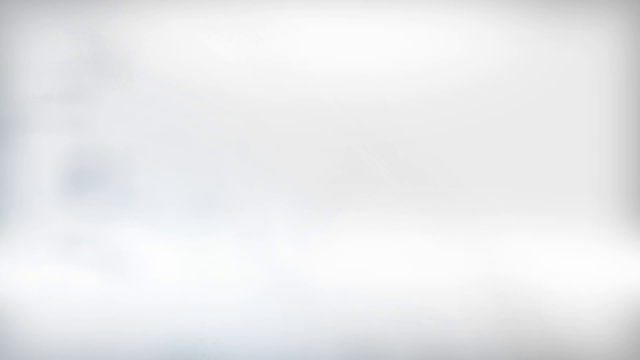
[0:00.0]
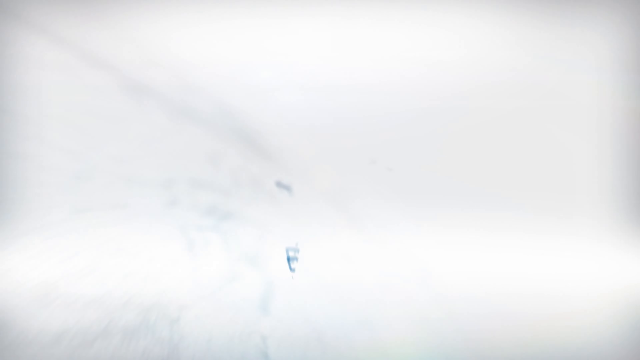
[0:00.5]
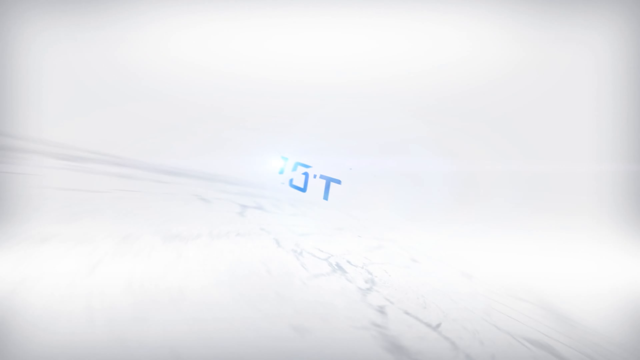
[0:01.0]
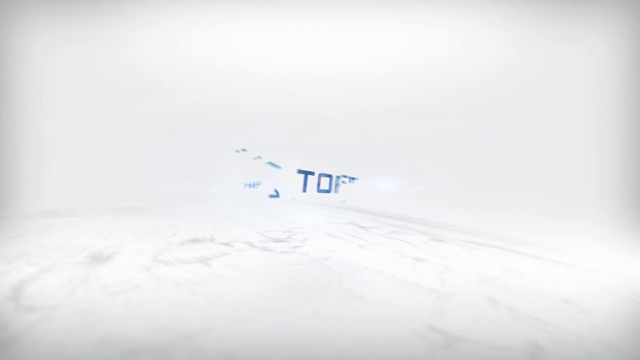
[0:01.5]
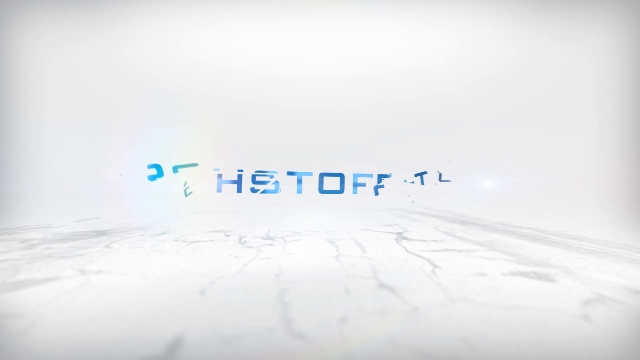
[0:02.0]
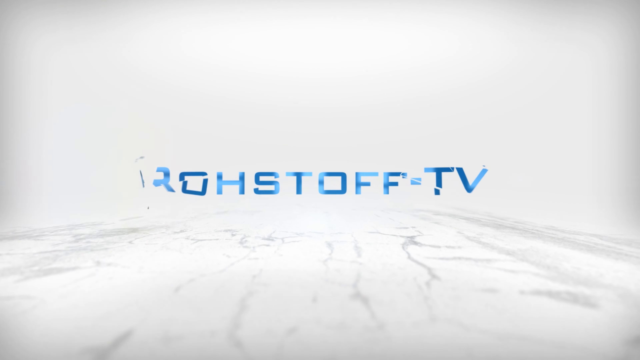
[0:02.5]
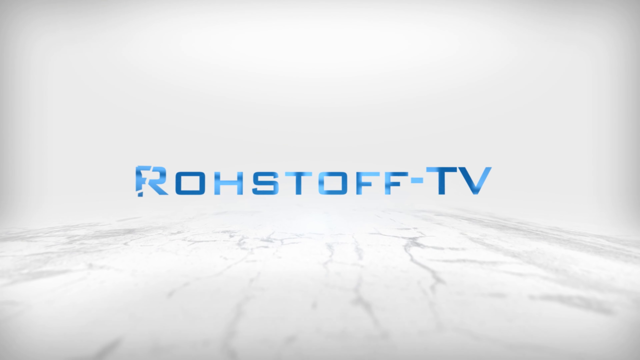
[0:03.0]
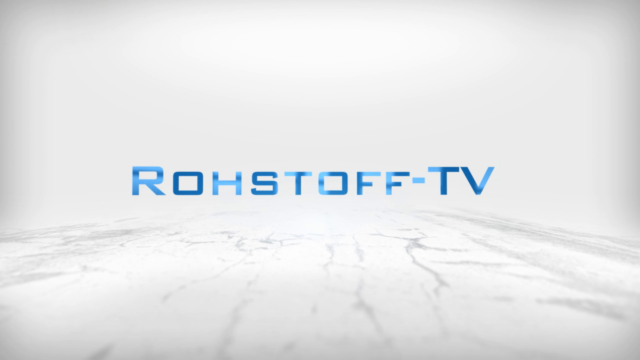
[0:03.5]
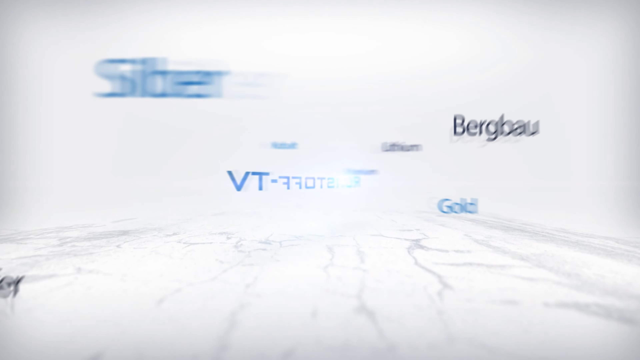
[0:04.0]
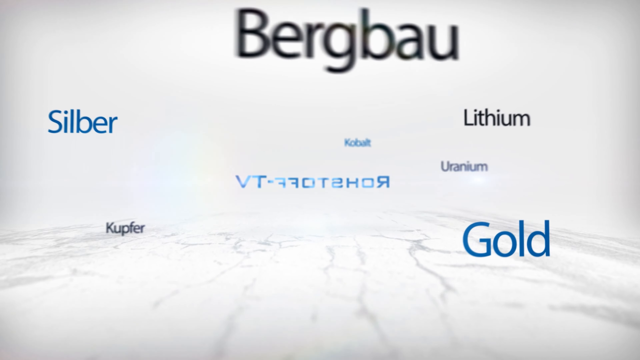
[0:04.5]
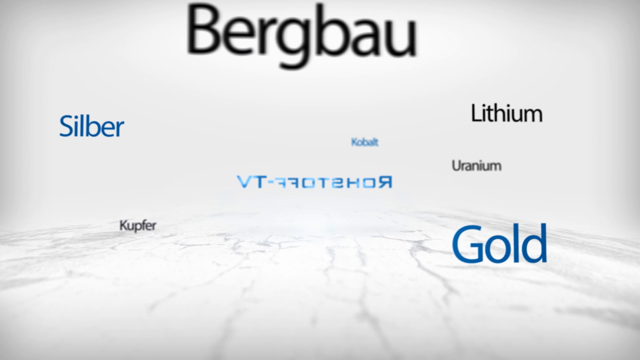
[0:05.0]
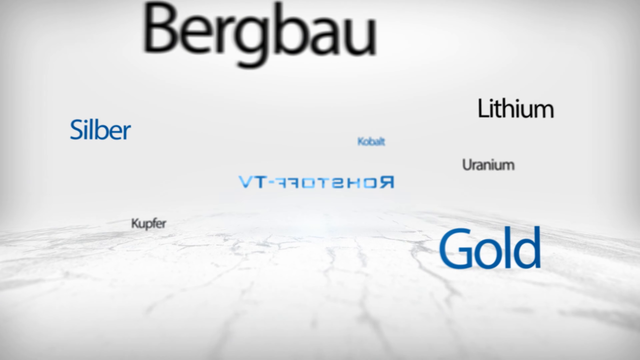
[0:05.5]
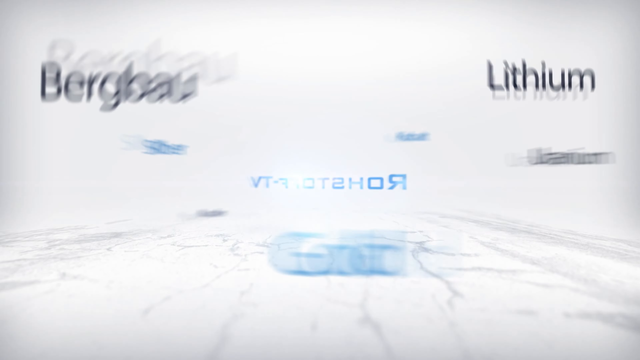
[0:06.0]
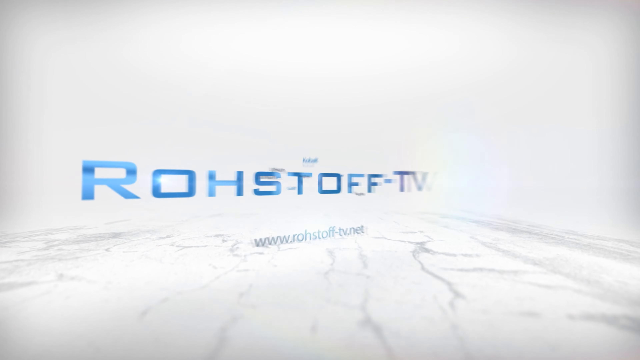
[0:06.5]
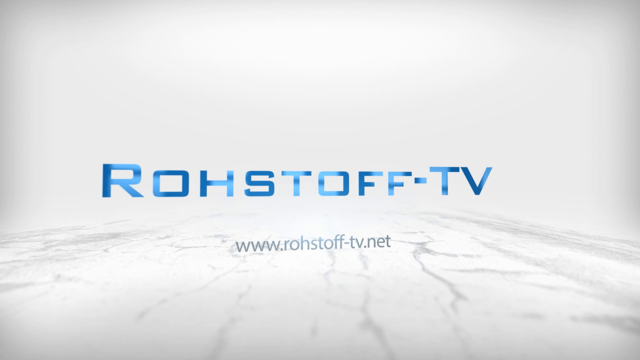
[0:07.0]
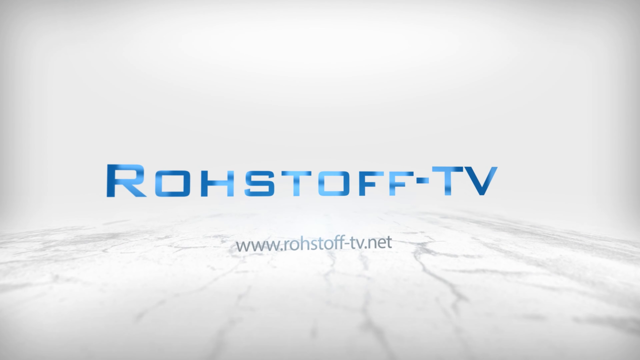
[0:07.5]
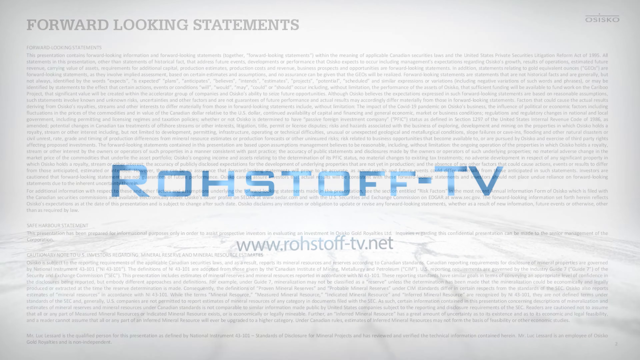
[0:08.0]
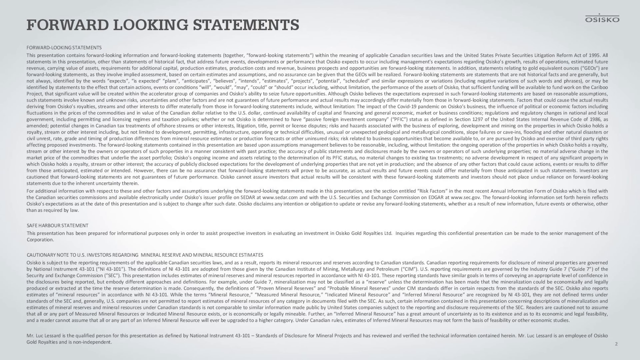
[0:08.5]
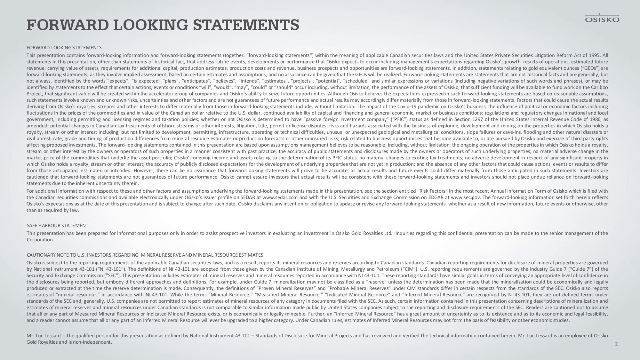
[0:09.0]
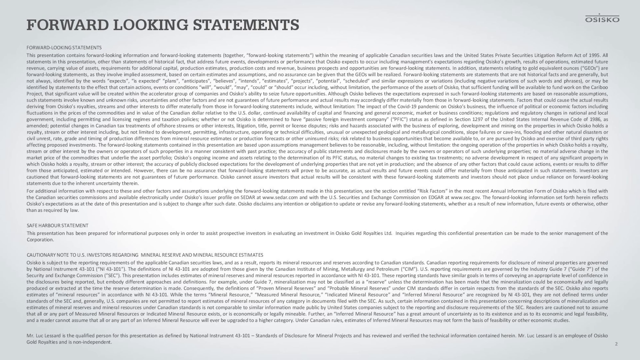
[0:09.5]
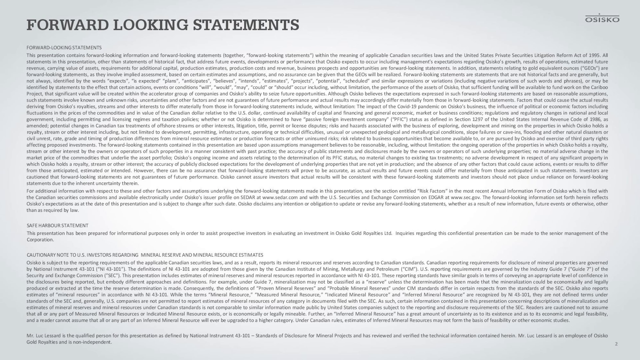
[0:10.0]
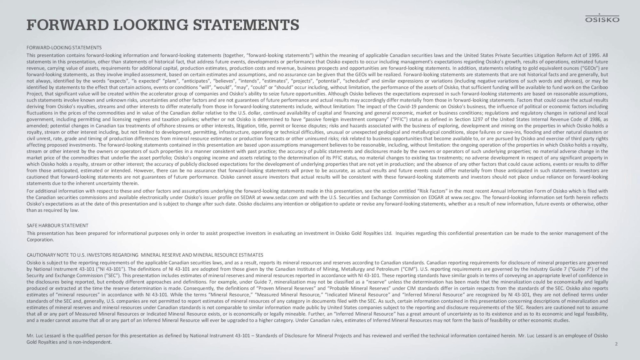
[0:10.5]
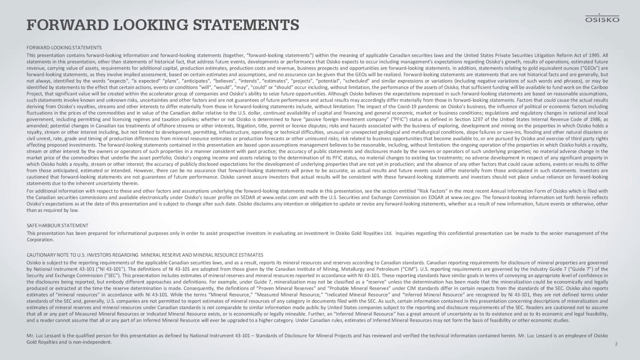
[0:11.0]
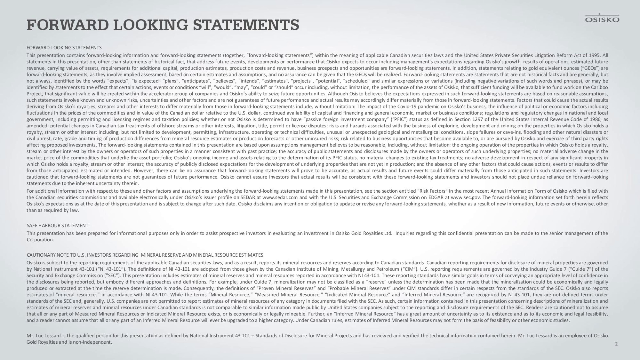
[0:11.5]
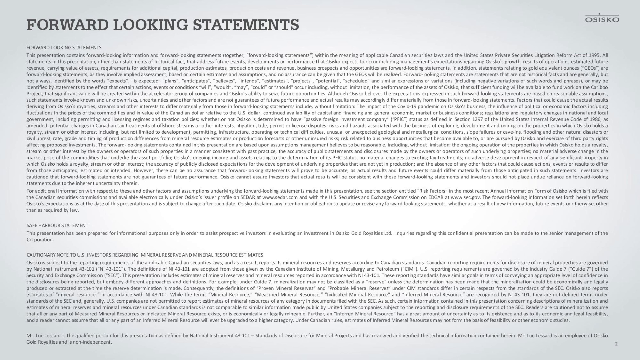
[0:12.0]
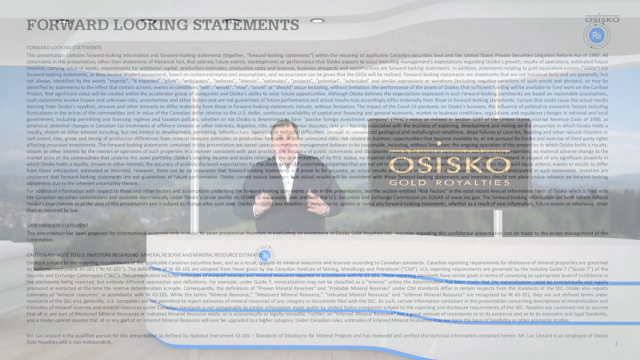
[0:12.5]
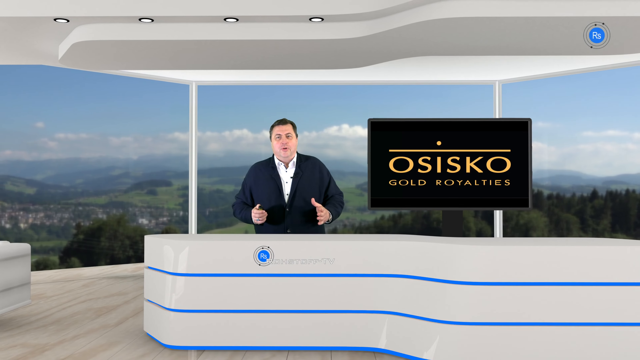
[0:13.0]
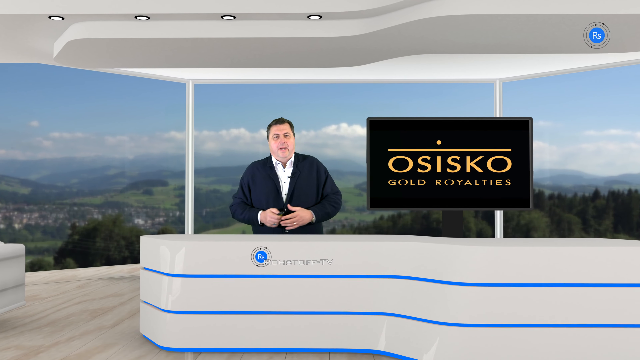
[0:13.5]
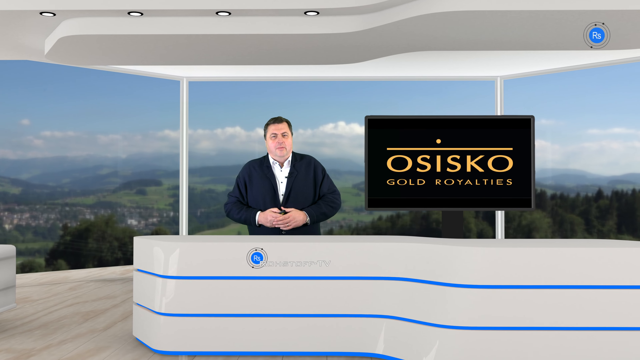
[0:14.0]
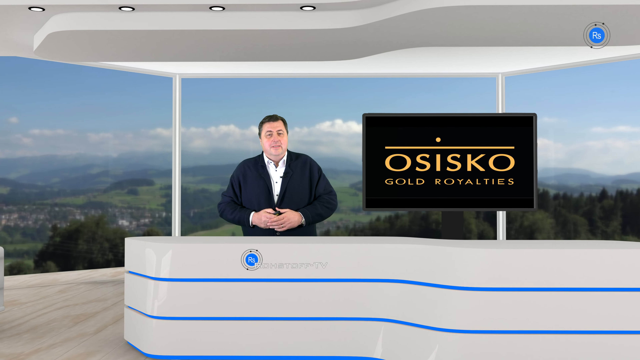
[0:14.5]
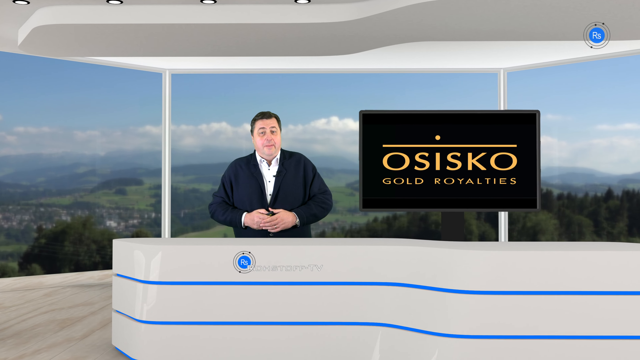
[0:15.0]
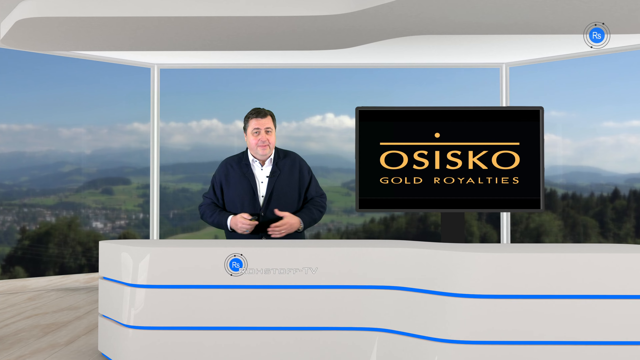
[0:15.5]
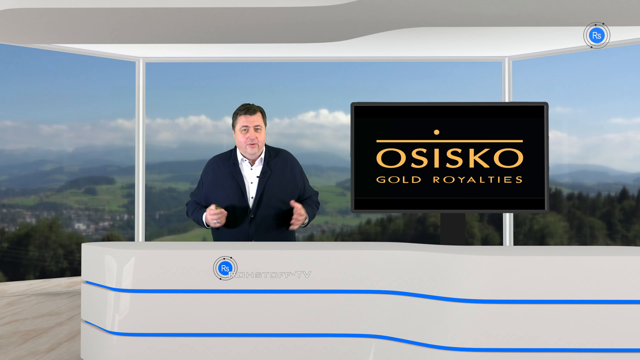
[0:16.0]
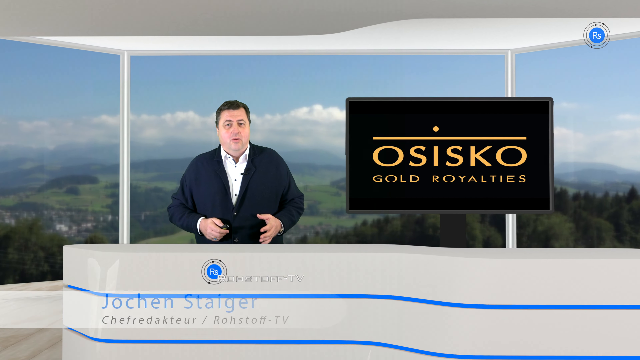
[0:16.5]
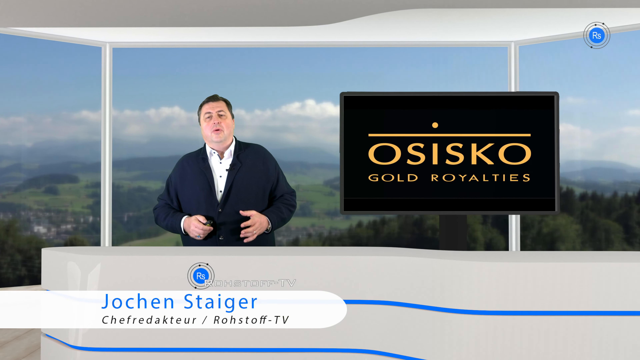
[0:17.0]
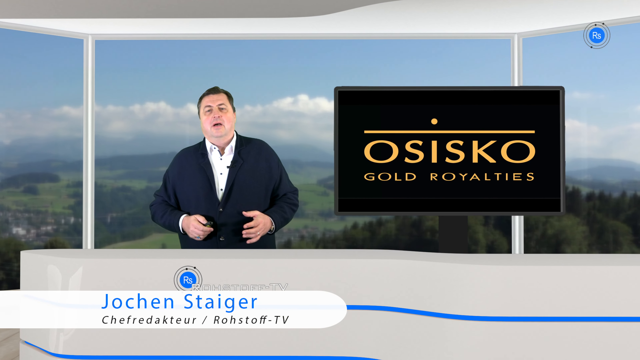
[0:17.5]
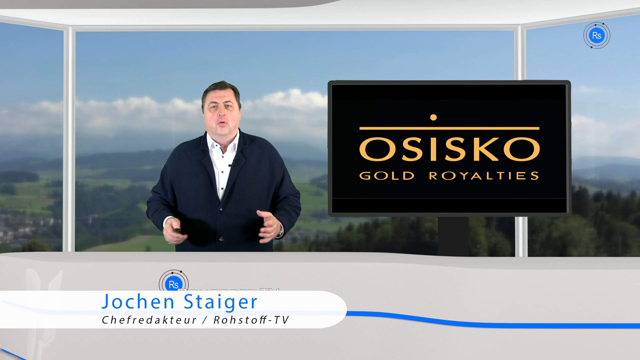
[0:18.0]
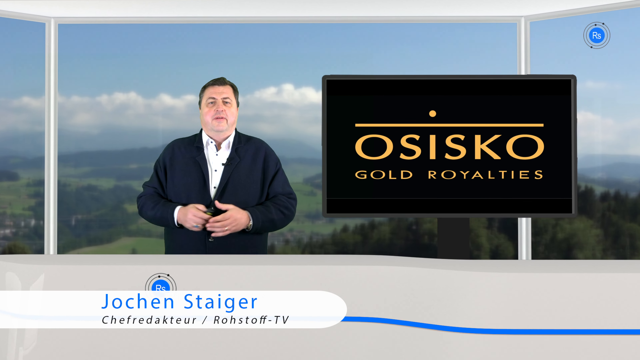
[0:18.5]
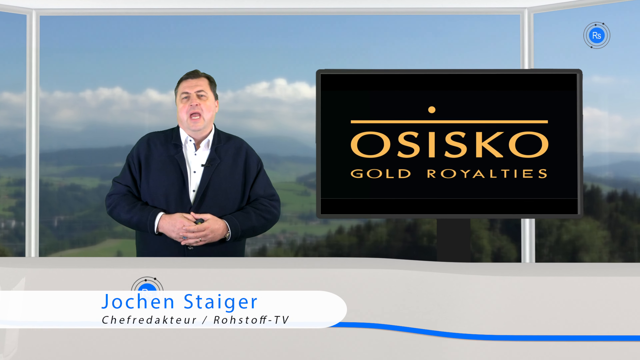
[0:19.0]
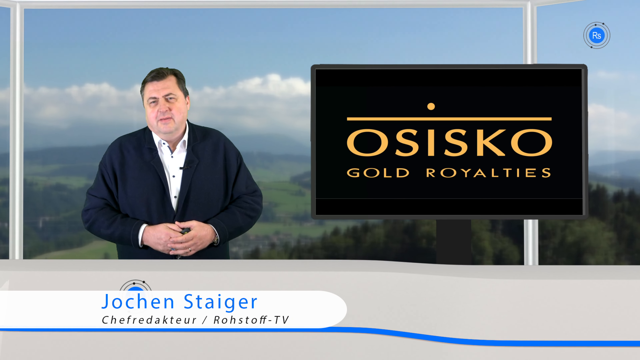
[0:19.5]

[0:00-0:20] A TV broadcast shows a news headline by RUSHT TV about Osisko Gold Royalties.